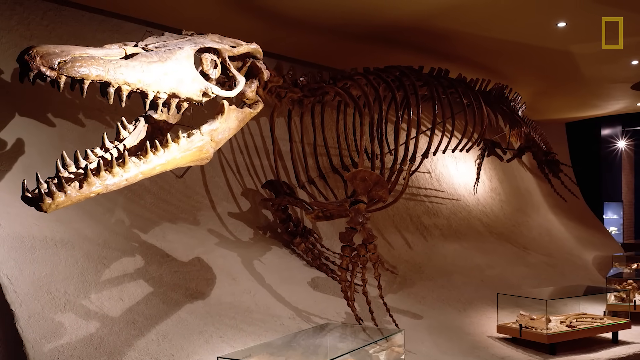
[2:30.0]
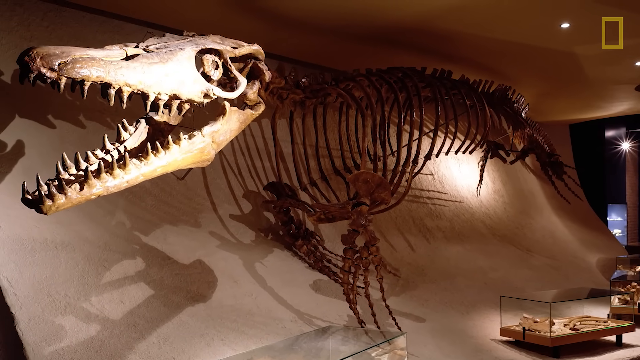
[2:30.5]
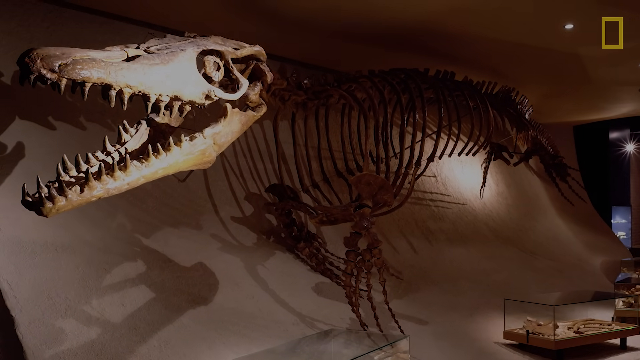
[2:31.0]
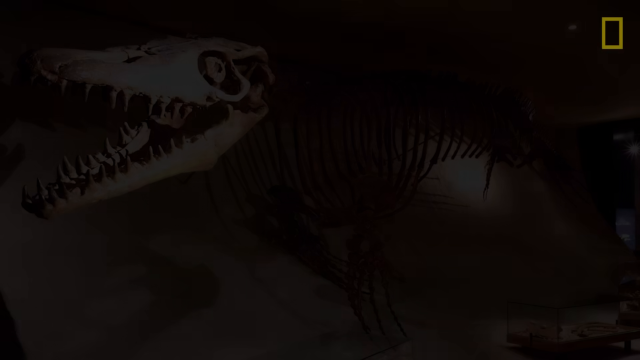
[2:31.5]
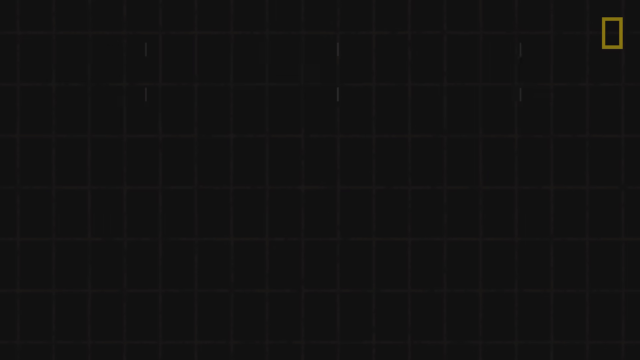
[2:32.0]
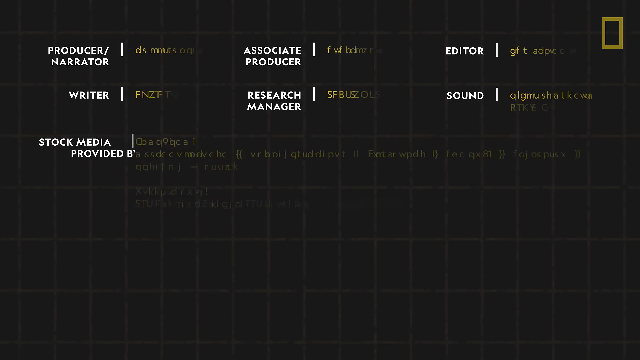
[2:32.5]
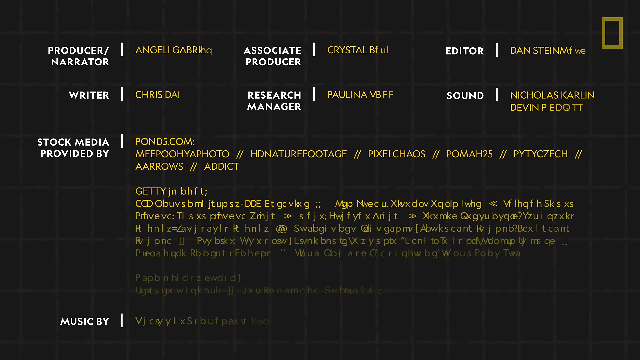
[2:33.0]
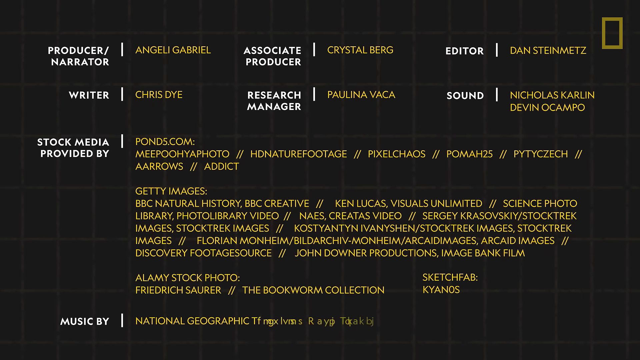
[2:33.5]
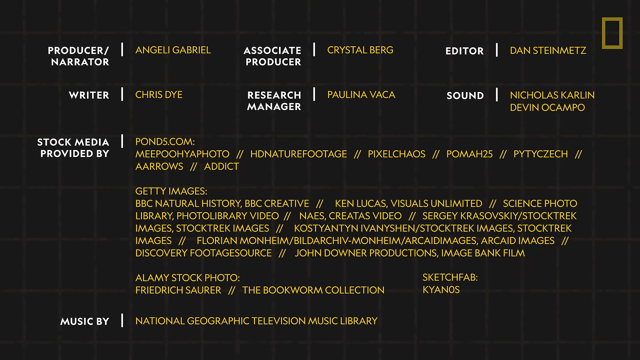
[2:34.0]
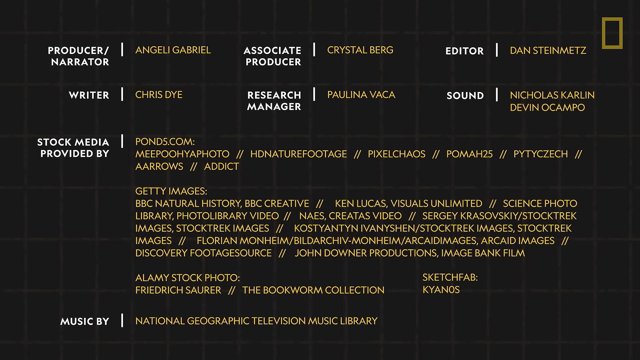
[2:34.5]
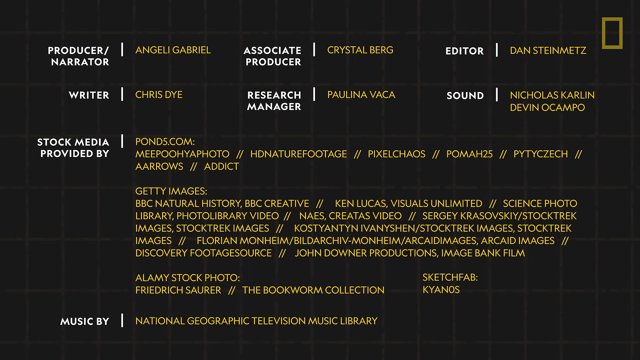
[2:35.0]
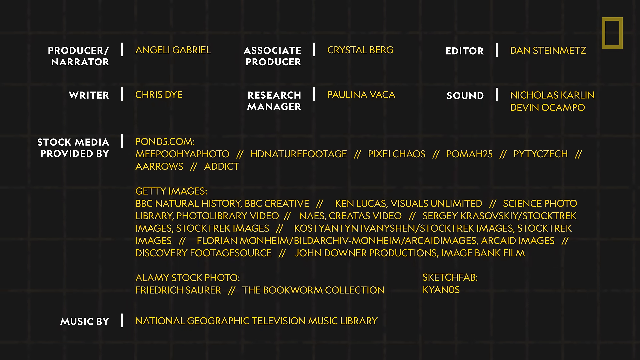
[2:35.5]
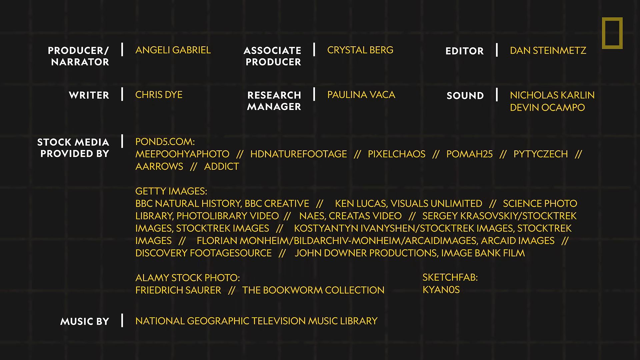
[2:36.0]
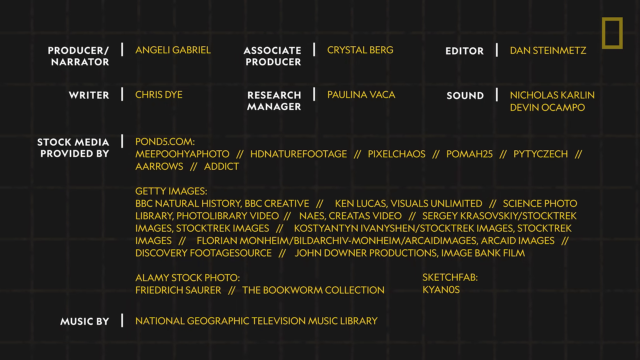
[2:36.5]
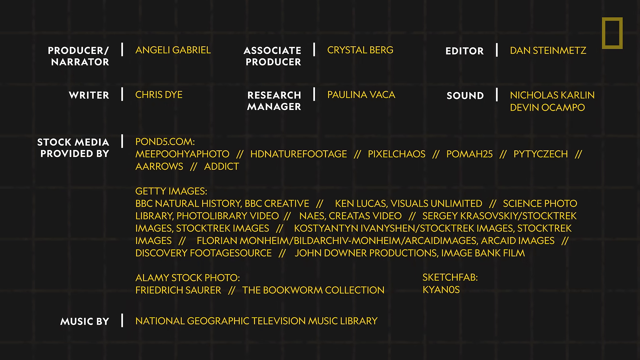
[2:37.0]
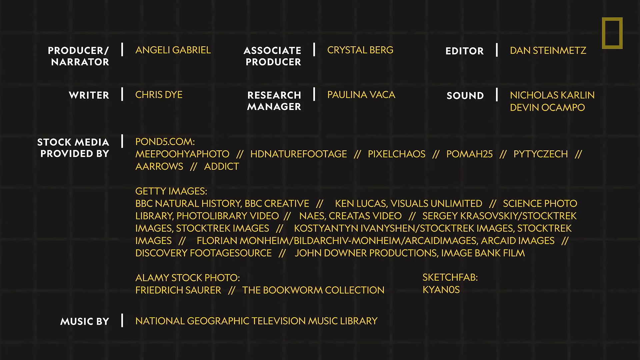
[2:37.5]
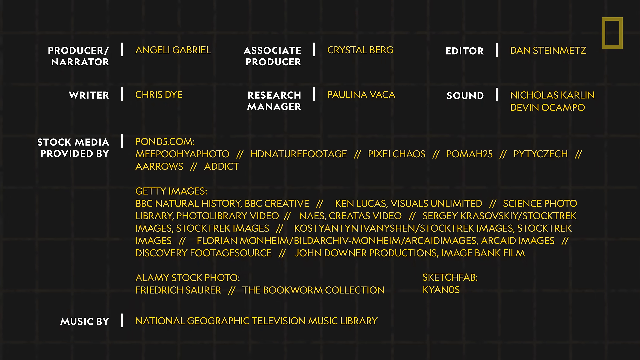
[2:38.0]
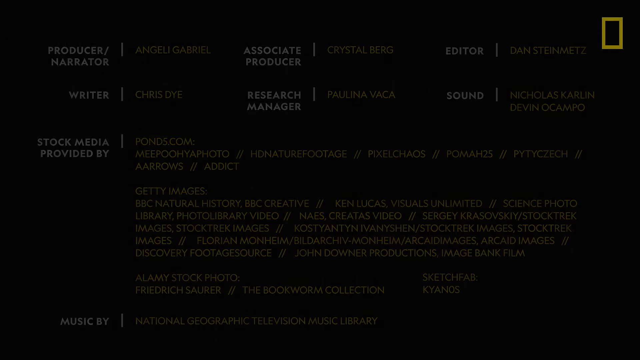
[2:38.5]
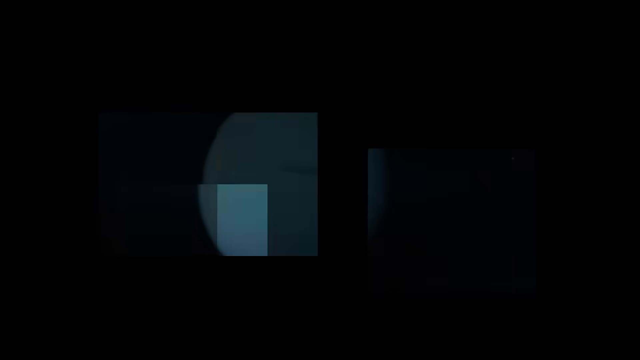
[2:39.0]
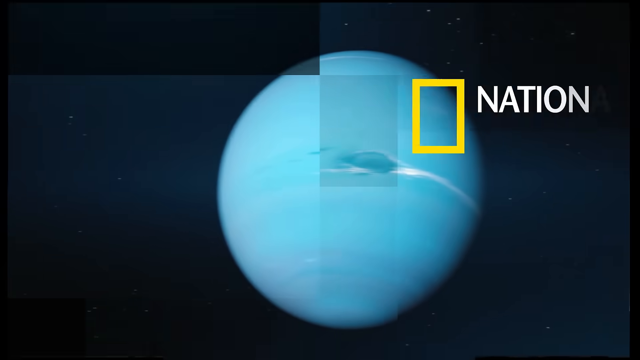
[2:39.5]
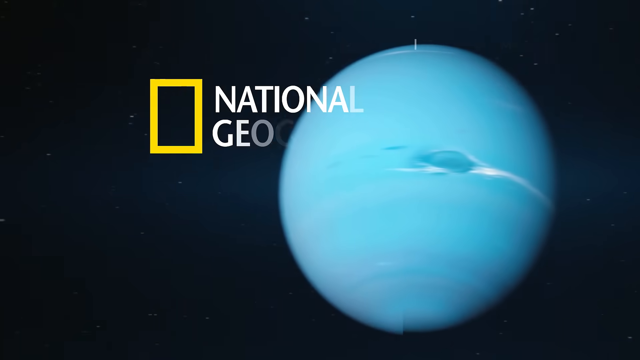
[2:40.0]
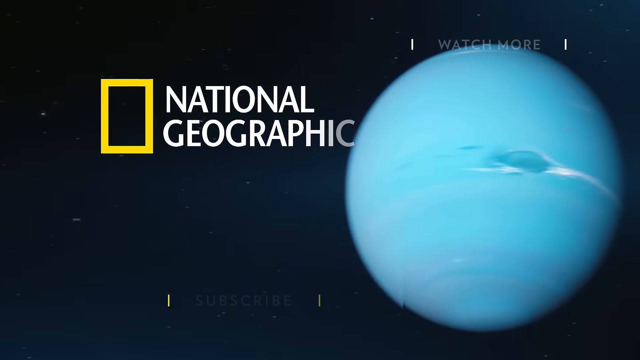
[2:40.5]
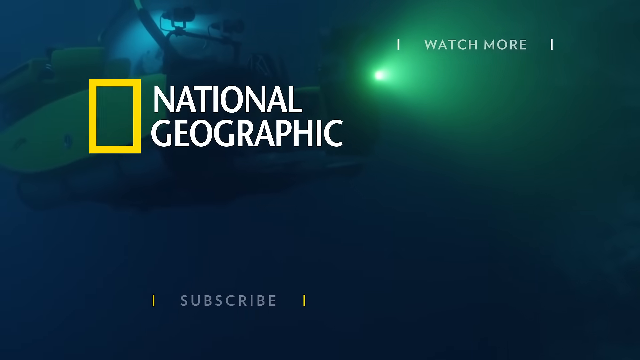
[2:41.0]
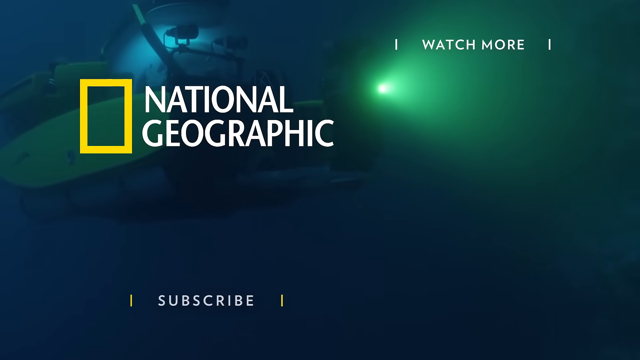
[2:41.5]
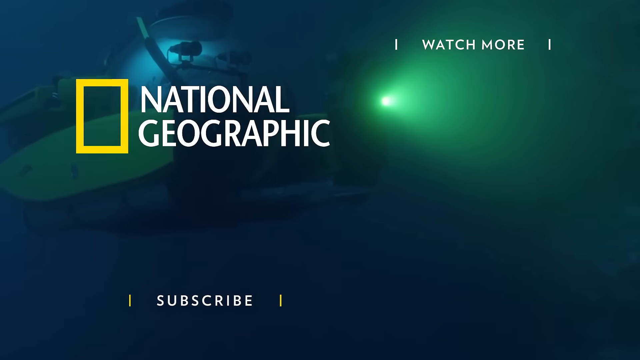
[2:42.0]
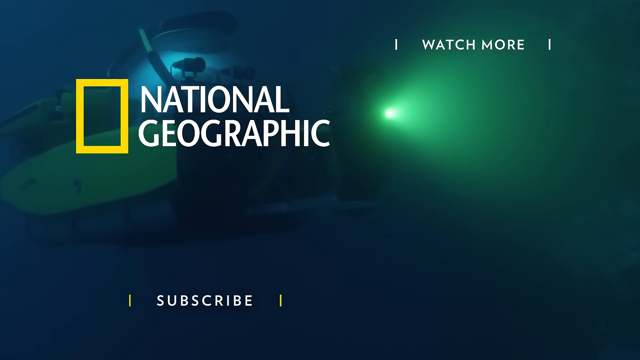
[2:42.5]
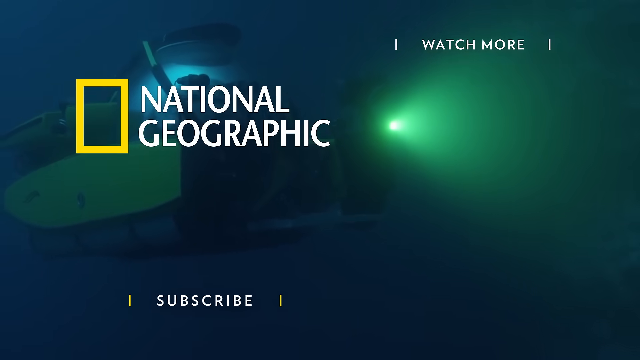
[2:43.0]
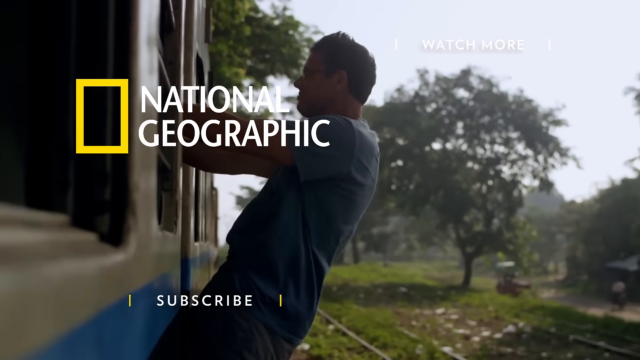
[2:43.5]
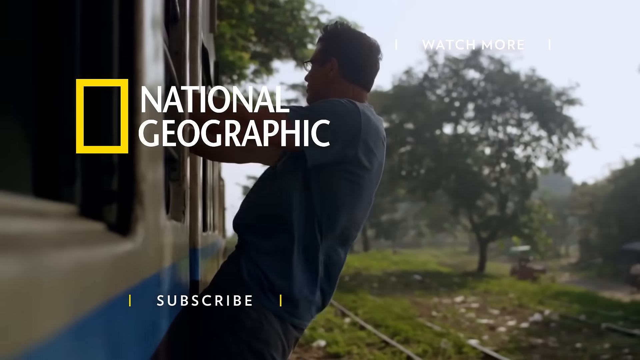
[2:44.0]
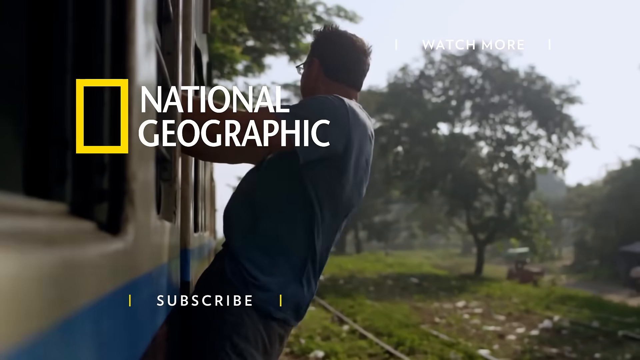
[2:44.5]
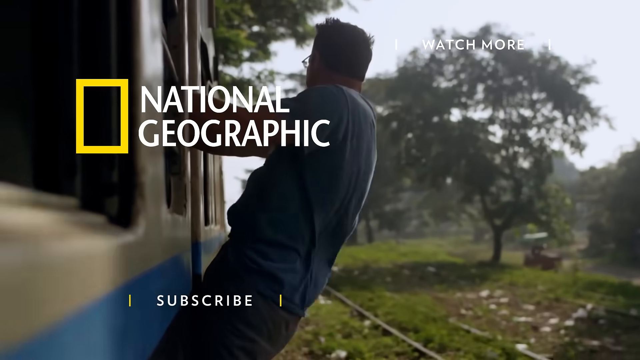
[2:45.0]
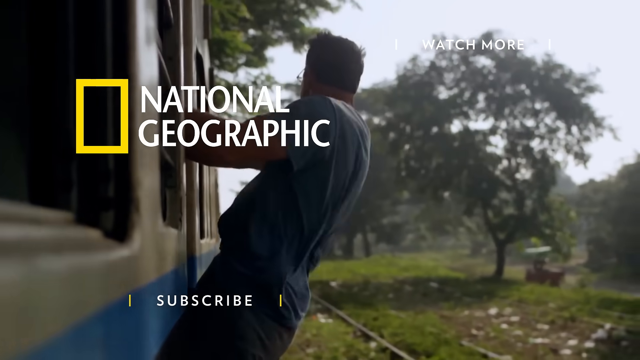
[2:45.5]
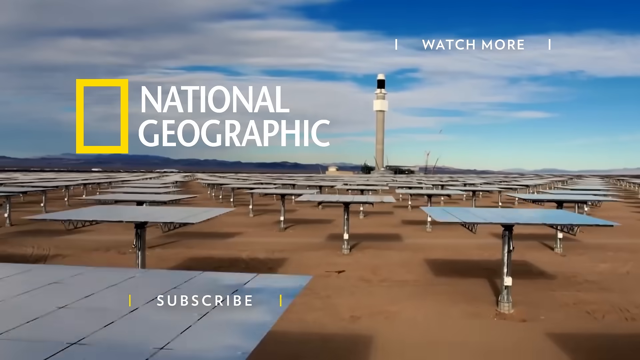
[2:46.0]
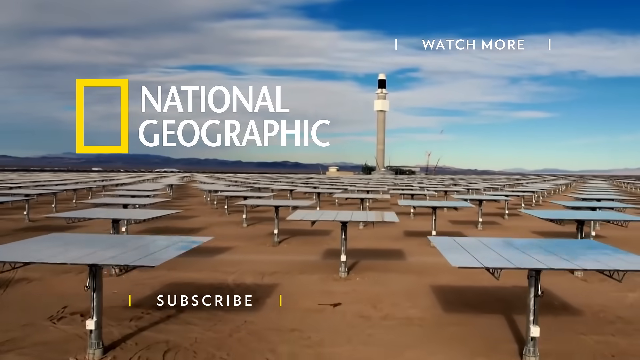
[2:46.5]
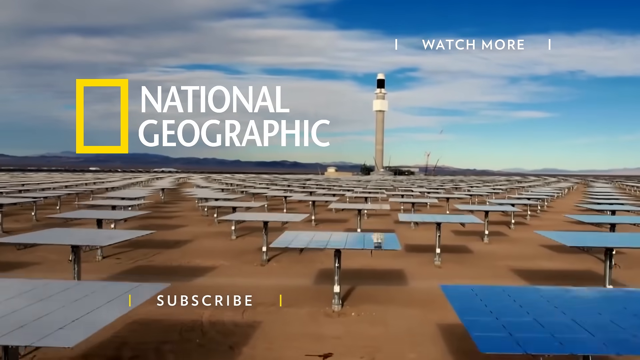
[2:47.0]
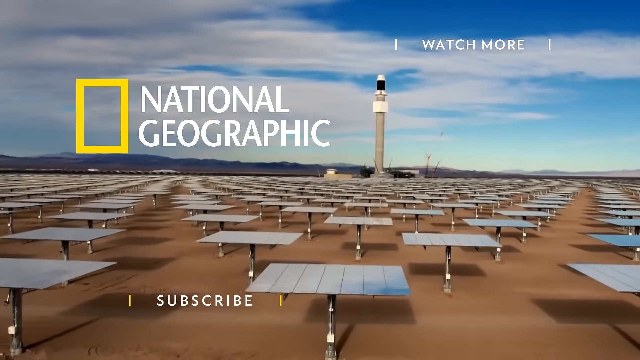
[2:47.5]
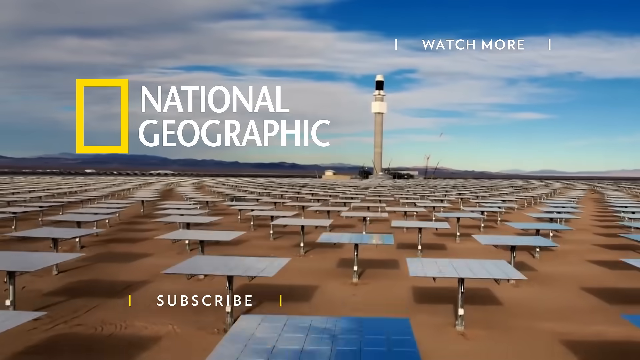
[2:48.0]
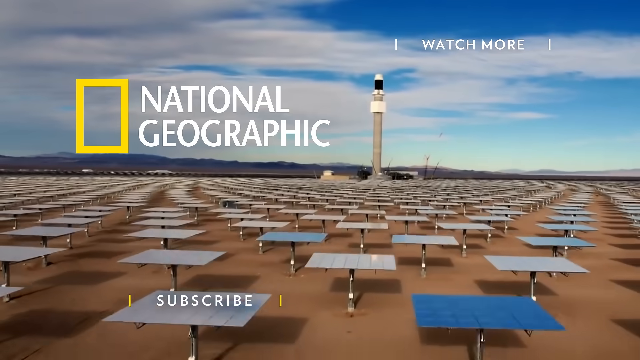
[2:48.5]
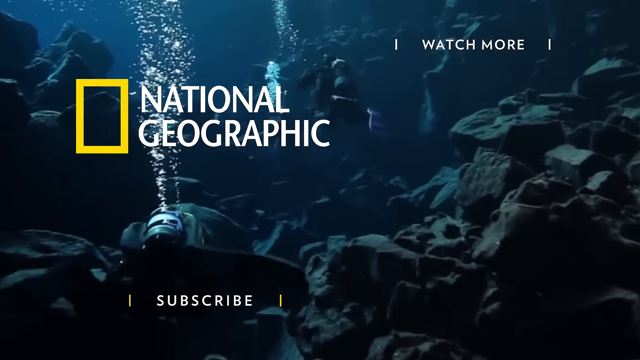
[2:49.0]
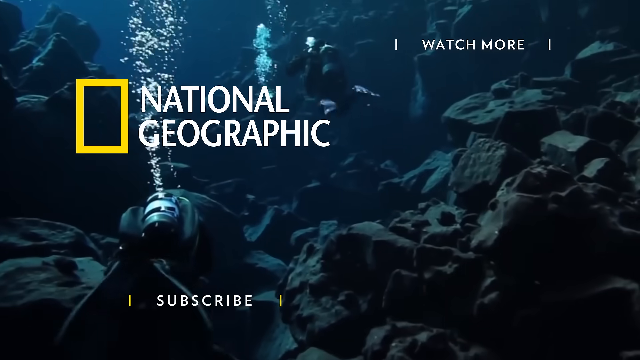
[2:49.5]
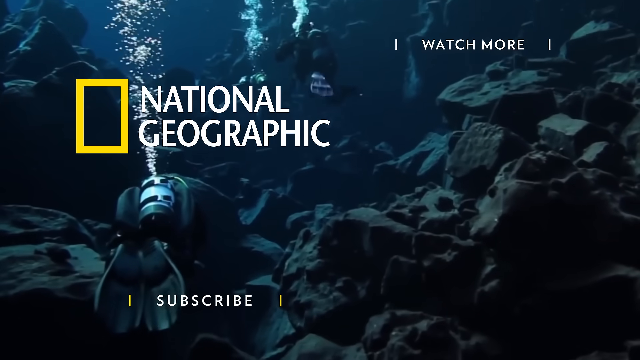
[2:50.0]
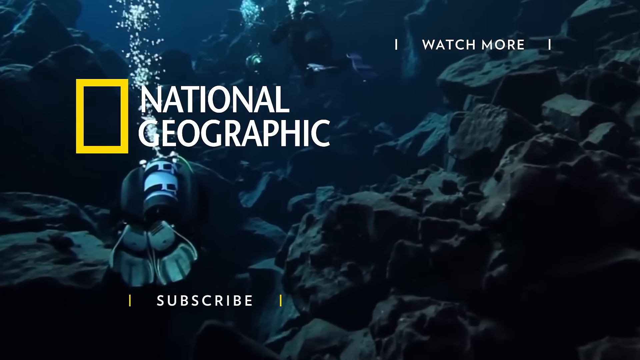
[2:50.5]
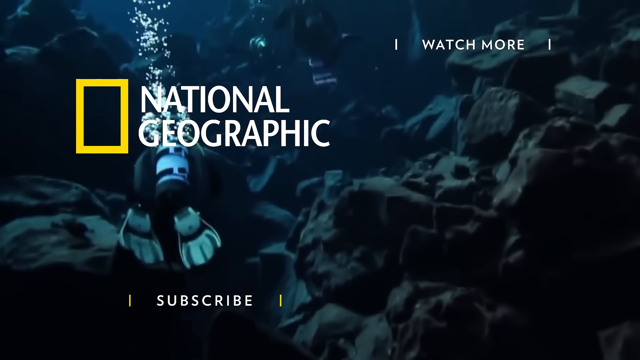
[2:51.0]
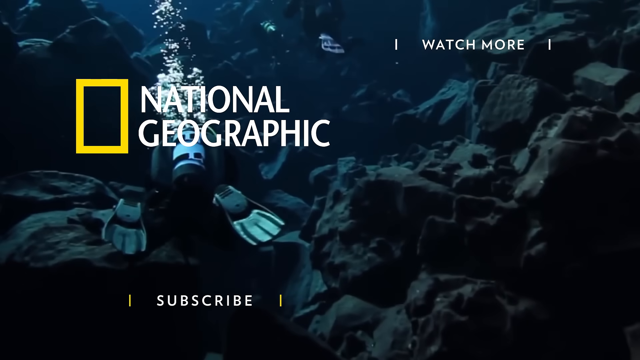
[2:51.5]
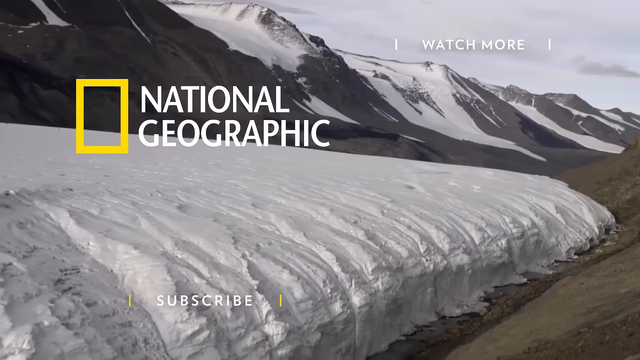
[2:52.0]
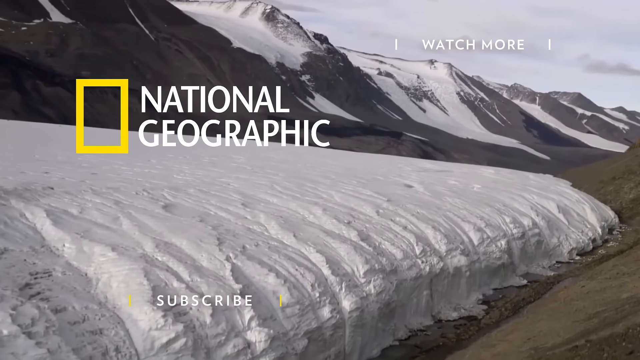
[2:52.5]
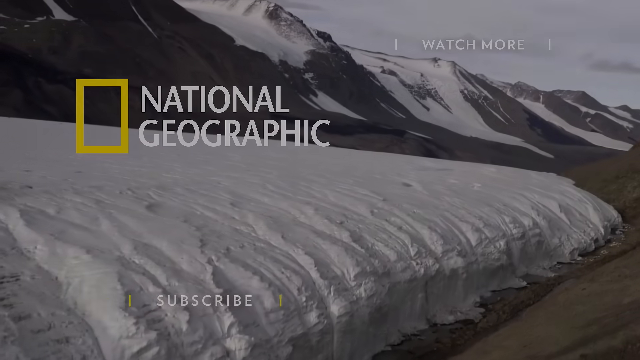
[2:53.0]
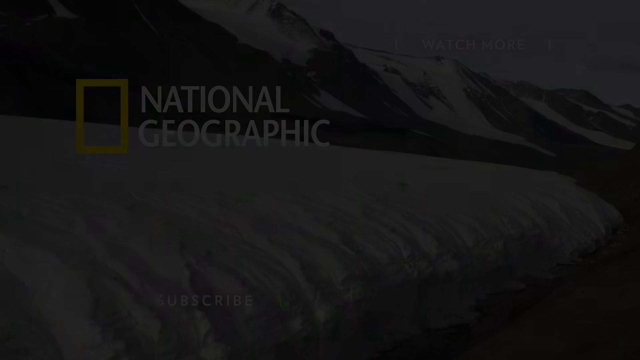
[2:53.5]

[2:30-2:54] The final part shows credits text listing producer, narration, writer and stock media, and states that the video is from National Geographic. It also shows a prompt to subscribe to National Geographic.